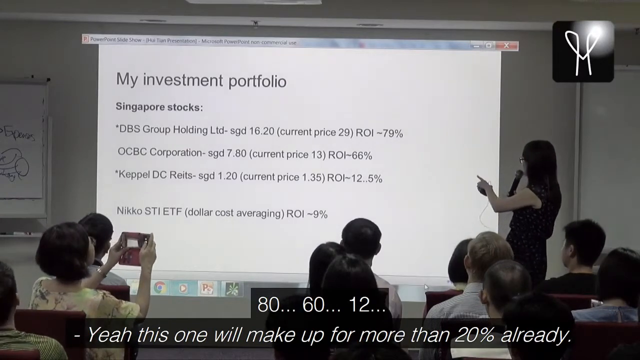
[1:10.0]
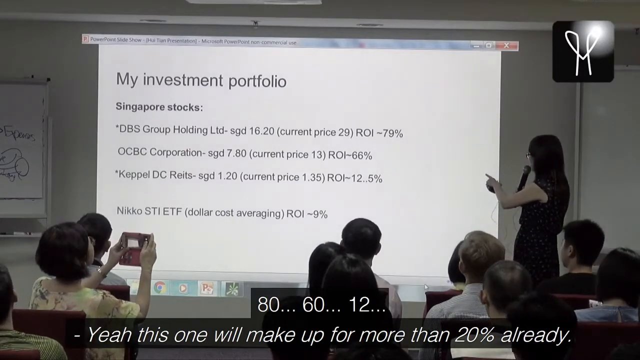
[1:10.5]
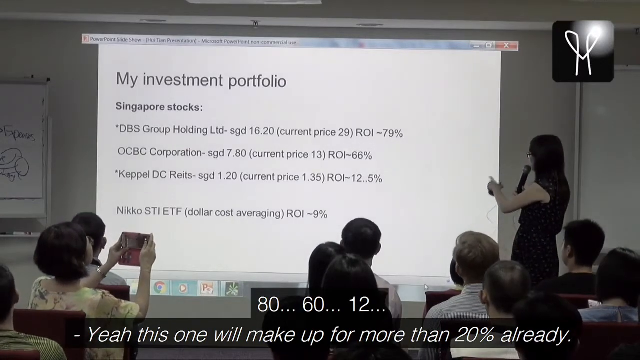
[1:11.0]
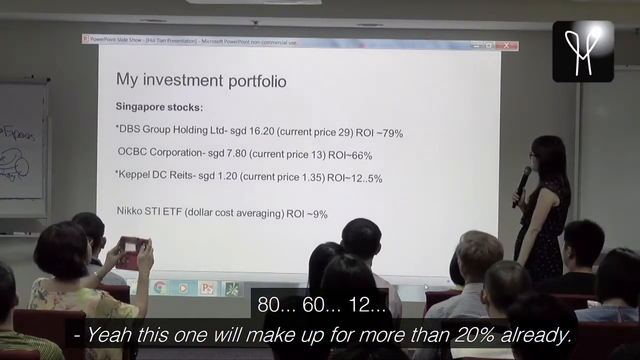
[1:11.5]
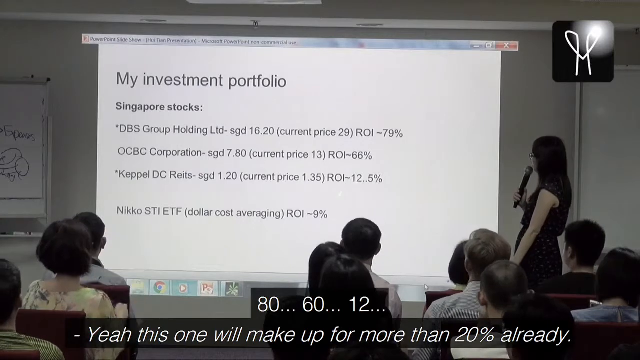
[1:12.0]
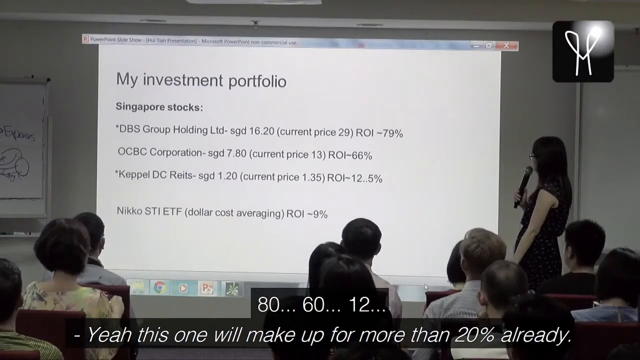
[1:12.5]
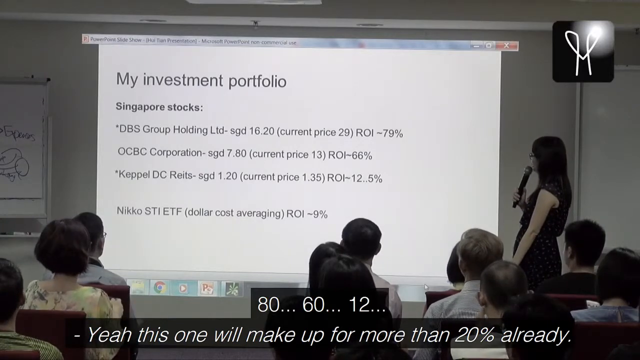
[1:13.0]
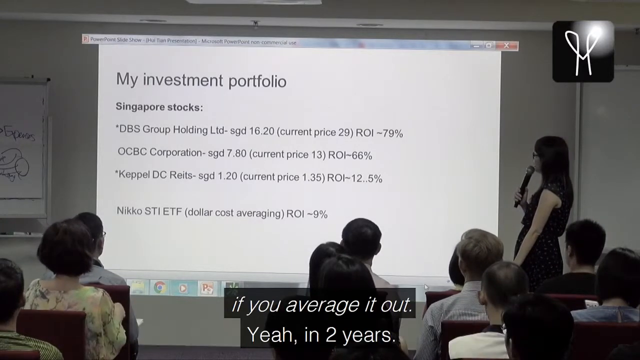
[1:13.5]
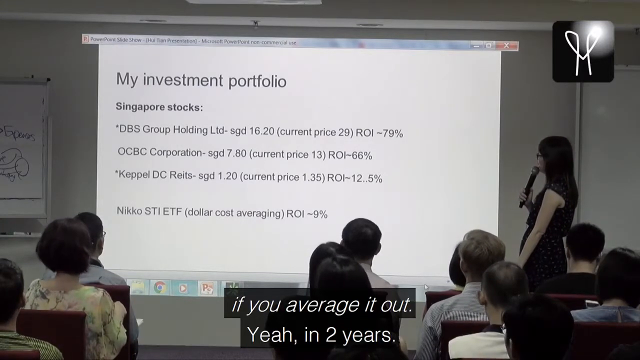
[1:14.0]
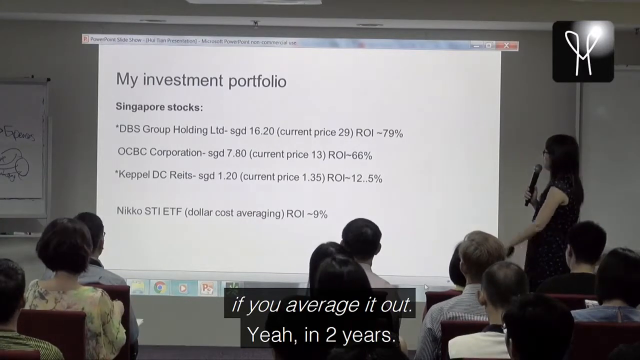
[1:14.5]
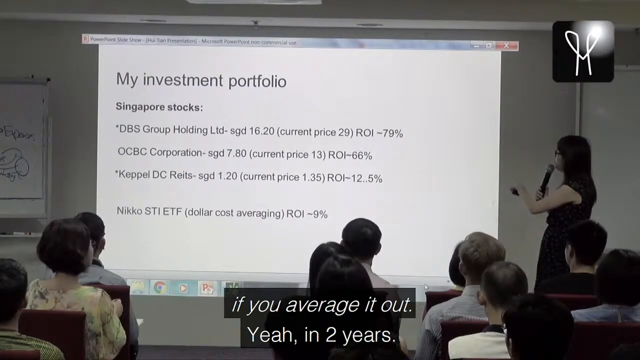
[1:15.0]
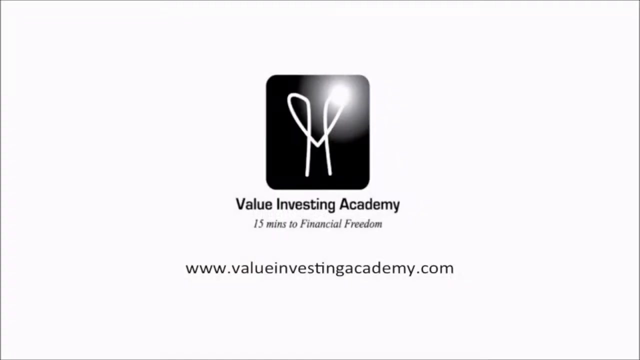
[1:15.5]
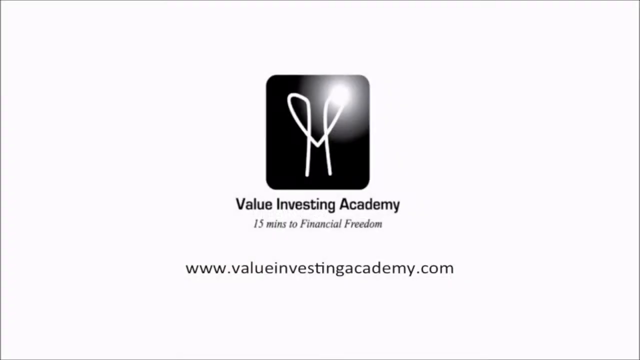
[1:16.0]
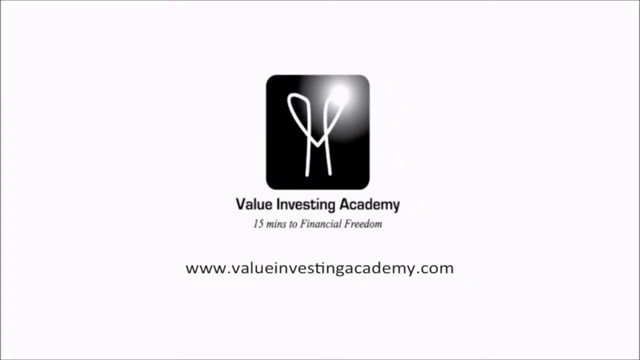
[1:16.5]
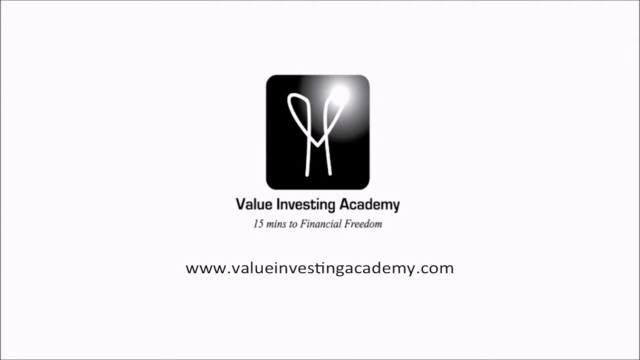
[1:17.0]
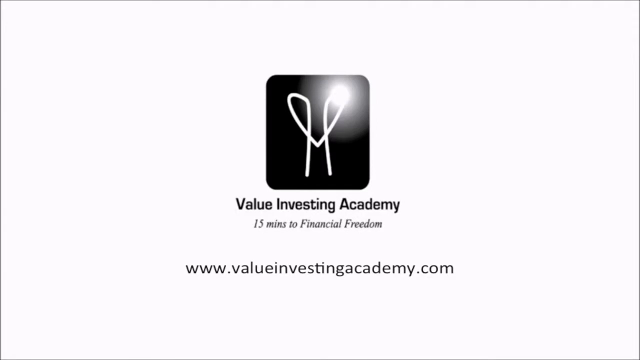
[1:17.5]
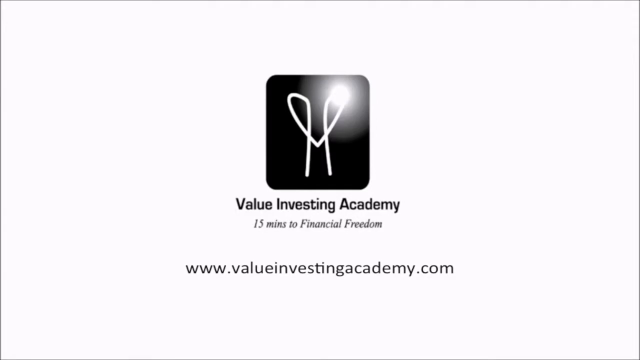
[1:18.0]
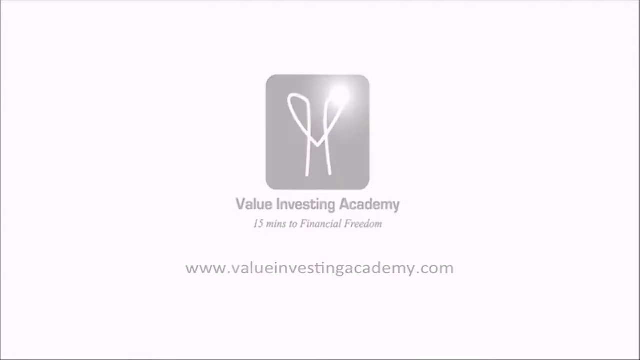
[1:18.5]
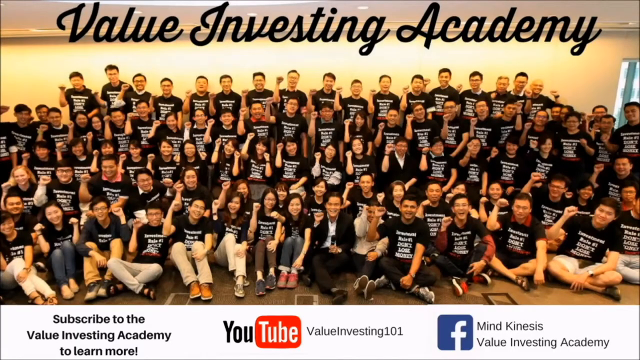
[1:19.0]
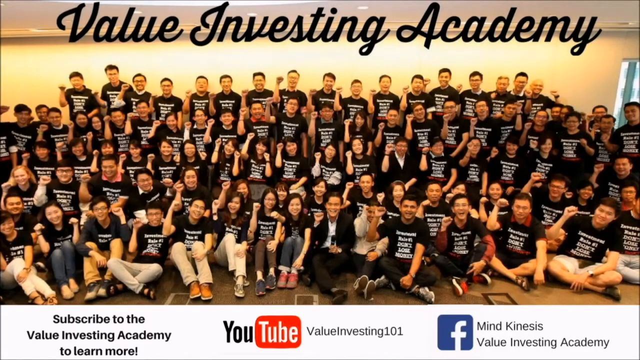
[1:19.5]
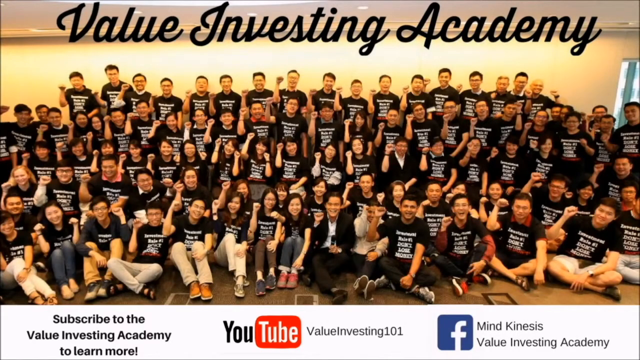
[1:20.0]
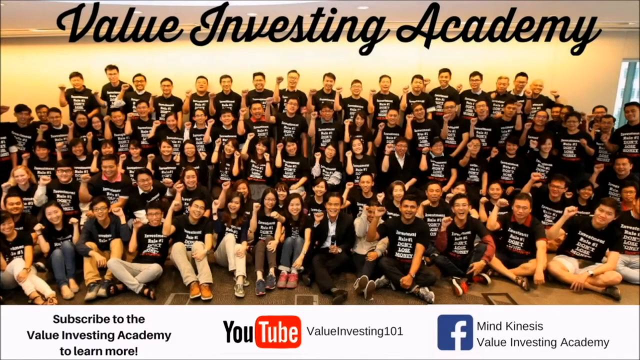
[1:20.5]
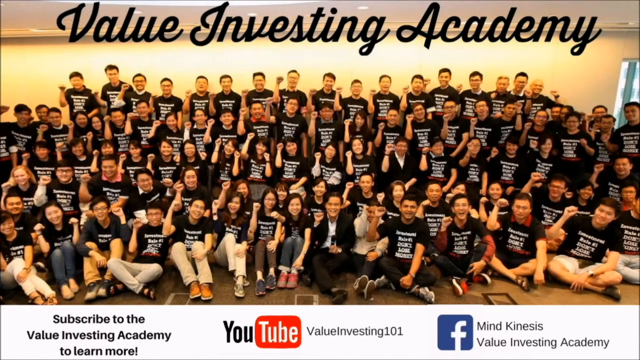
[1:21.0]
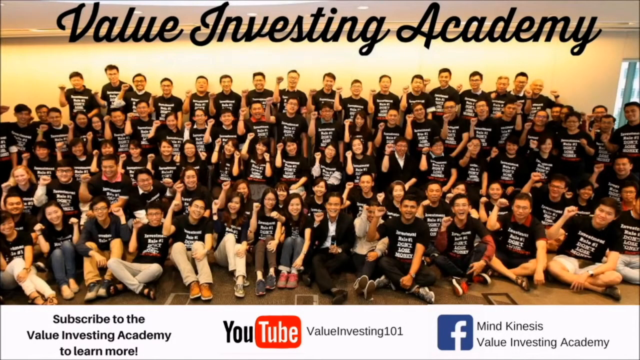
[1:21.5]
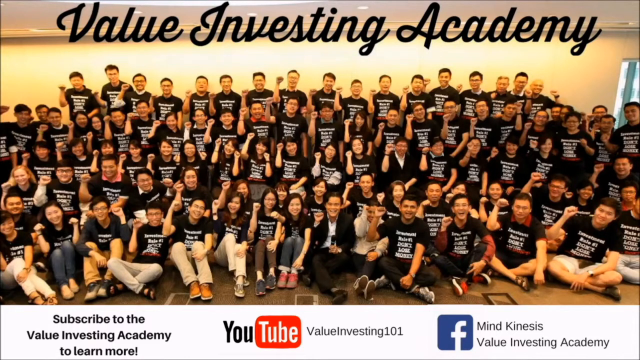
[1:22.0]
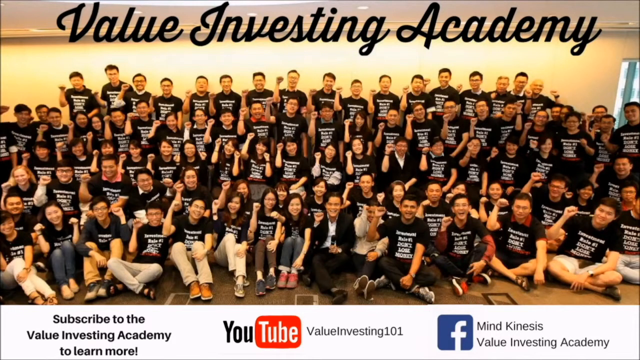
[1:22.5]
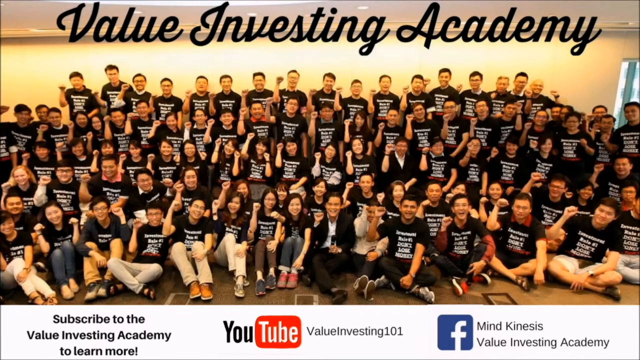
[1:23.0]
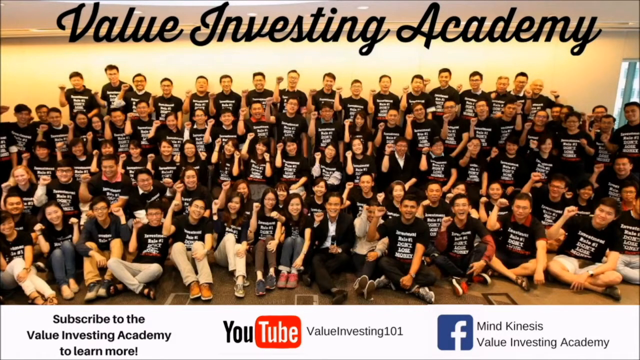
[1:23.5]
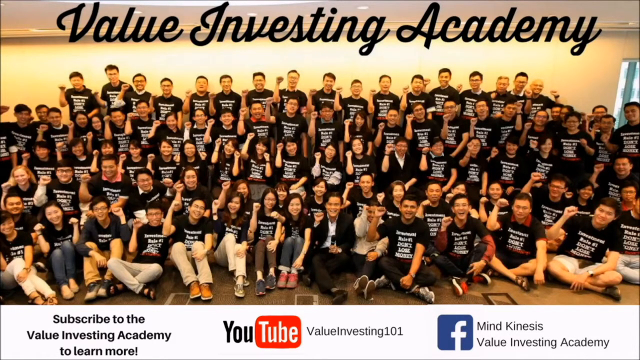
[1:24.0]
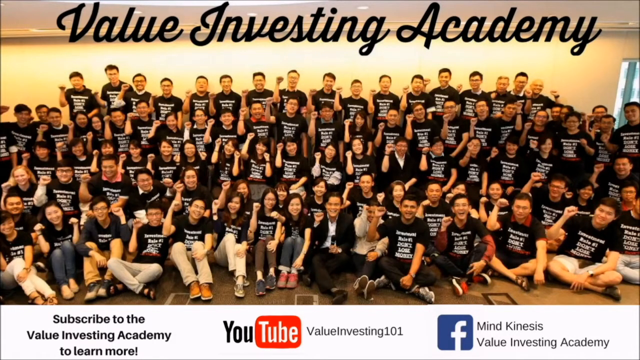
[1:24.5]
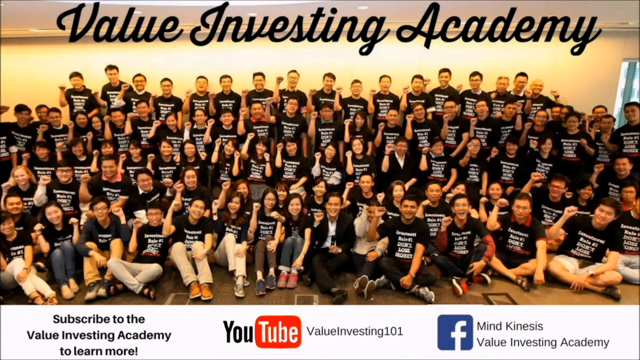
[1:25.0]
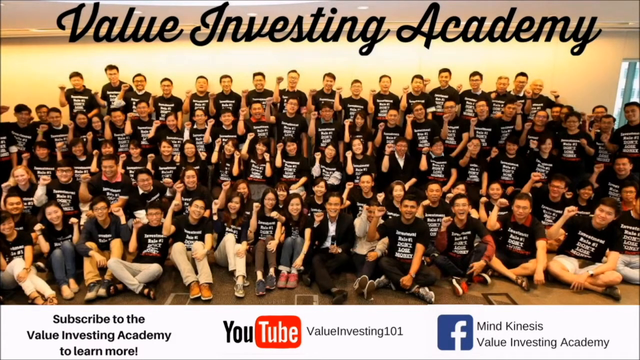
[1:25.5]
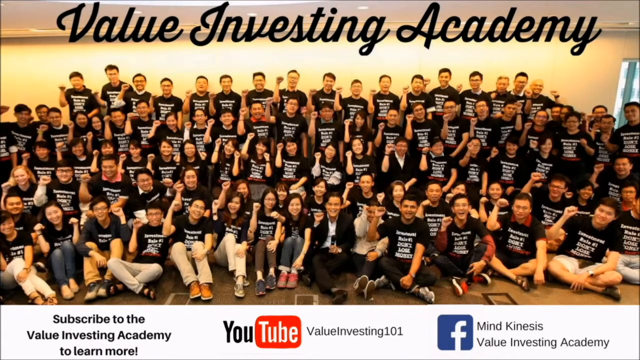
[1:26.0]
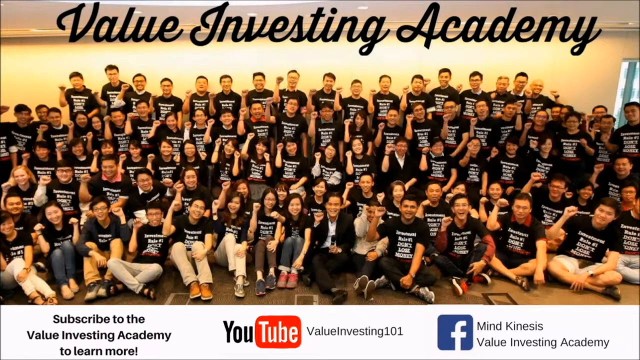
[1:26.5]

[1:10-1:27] The presenter points to the presentation, lets her arm drop, and does this one more time. The slide shows Singapore stocks for companies such as DBS Group Holding and OCBC Corporation, among others. DBS Group Holding has the highest ROI, at 79%, and the one with the lowest ROI is NIKKO STI ETF. In parentheses there is the comment "dollar cost averaging". After that comes what appears to be an end credit: a black logo with a line-based illustration, below it the text "Value Investing Academy", further below "15 minutes to financial freedom", and then the URL "valueinvestingacademy.com". The end screen has a white background and appears to have a very smooth gradient transitioning from white to black at the bottom of the screen.